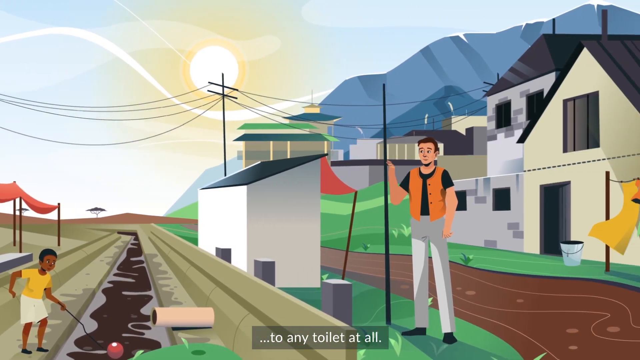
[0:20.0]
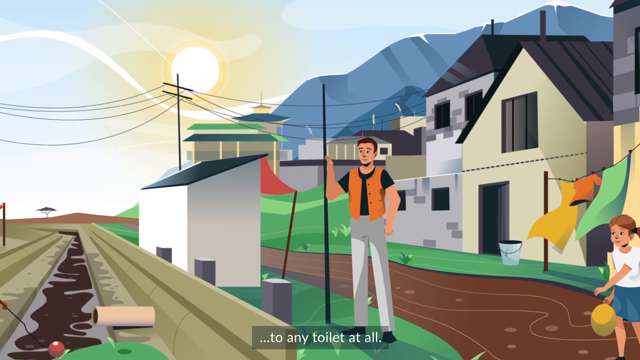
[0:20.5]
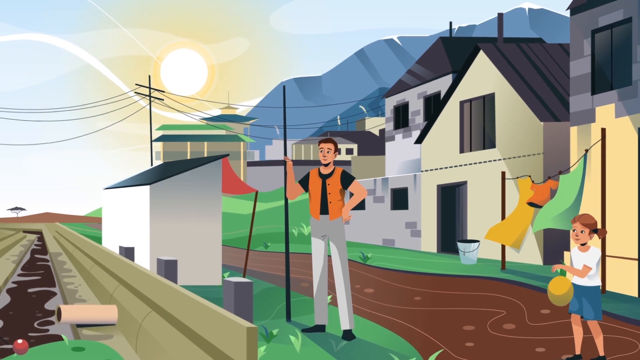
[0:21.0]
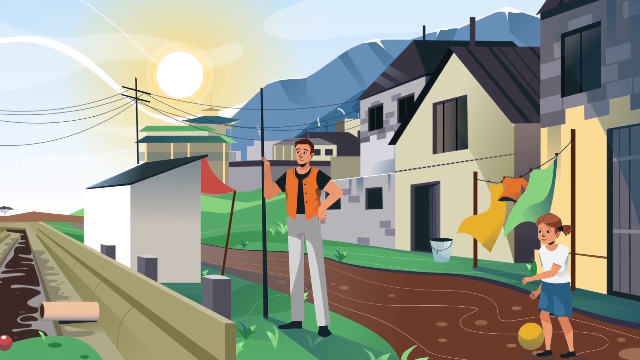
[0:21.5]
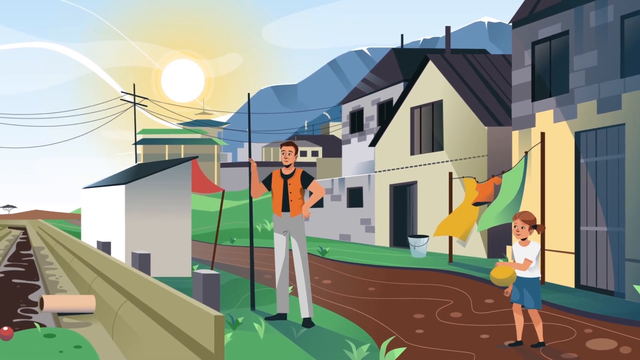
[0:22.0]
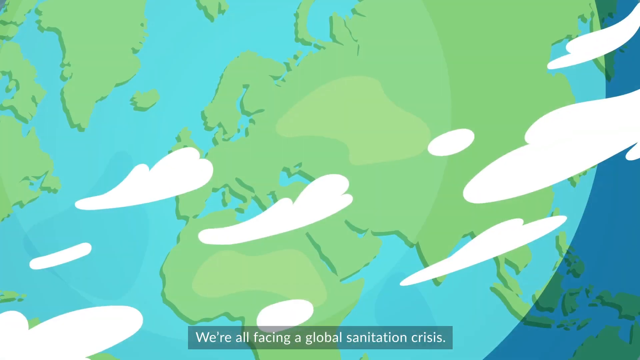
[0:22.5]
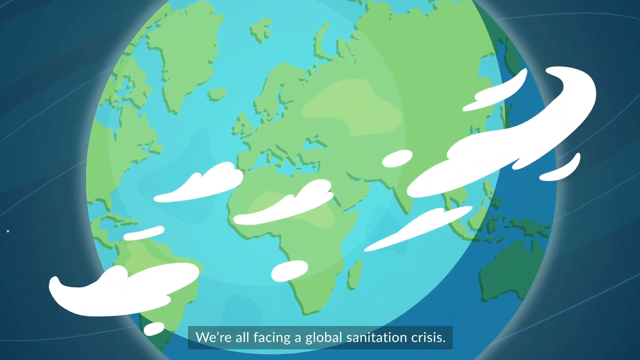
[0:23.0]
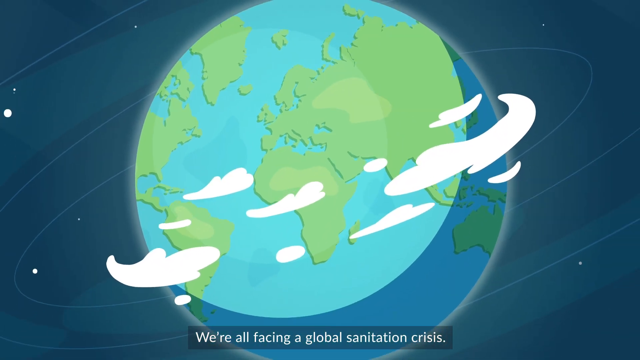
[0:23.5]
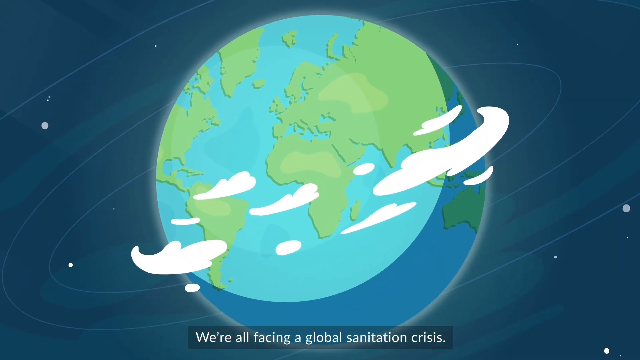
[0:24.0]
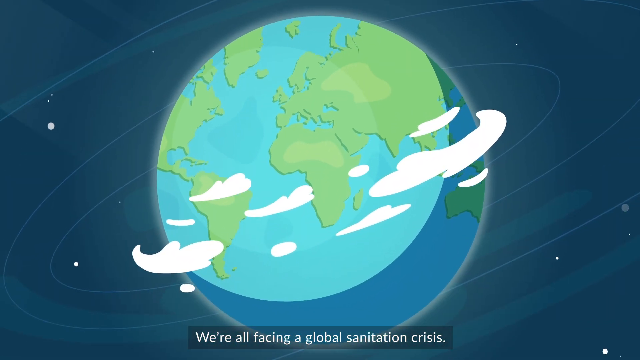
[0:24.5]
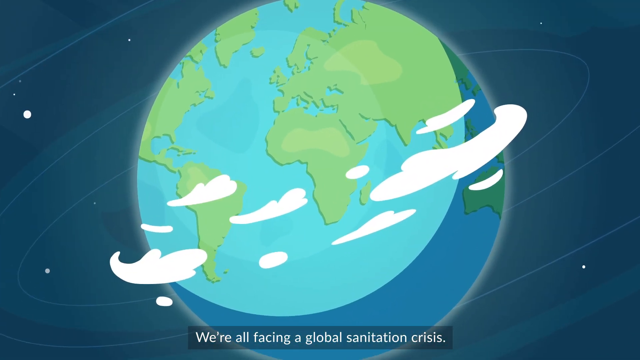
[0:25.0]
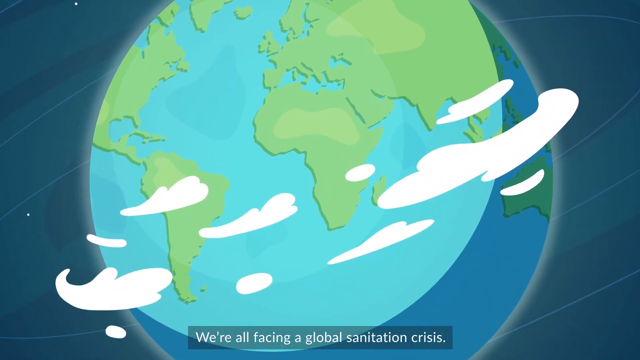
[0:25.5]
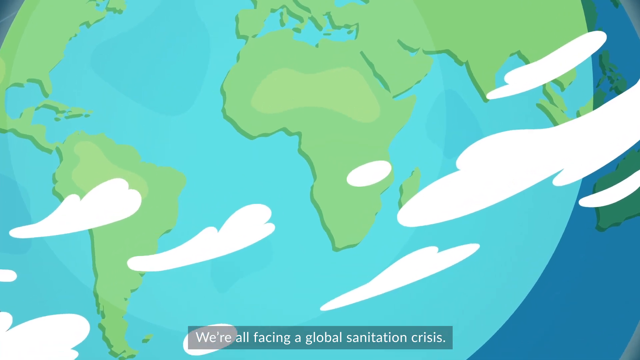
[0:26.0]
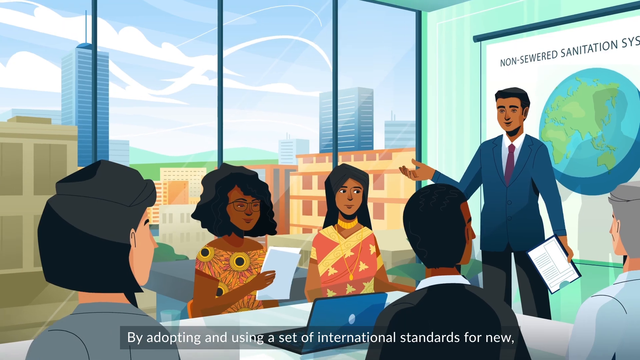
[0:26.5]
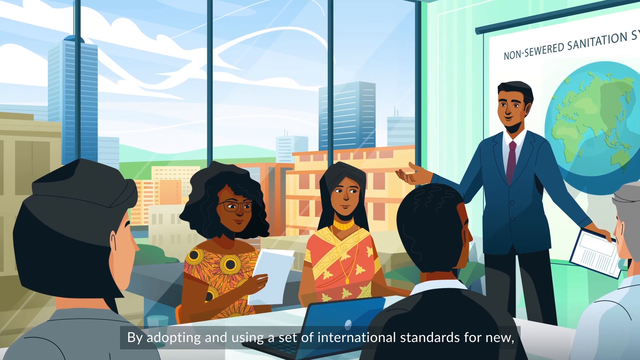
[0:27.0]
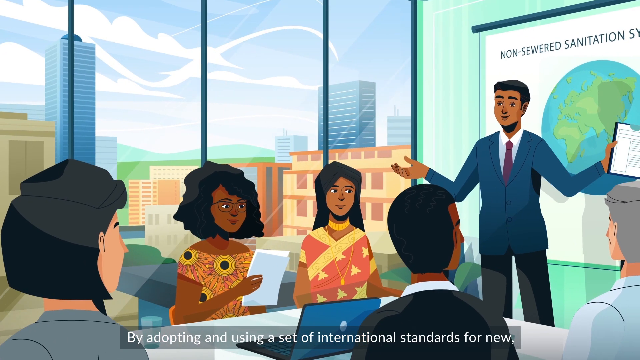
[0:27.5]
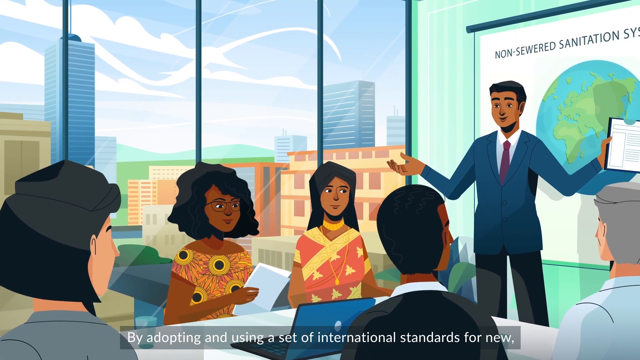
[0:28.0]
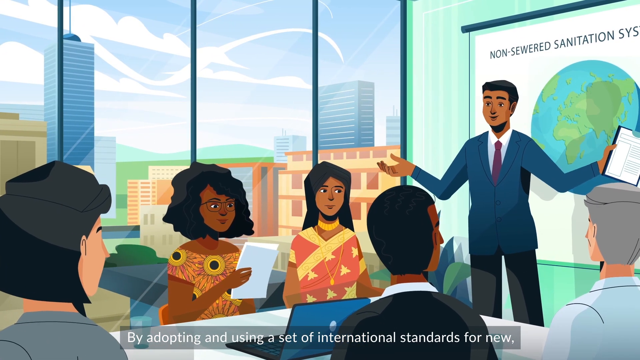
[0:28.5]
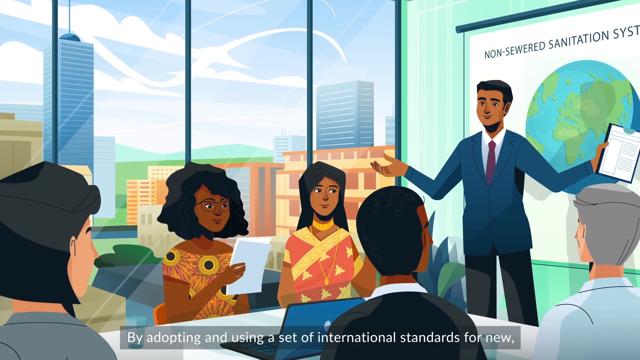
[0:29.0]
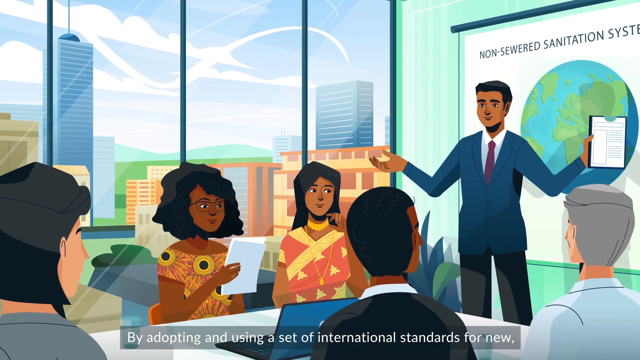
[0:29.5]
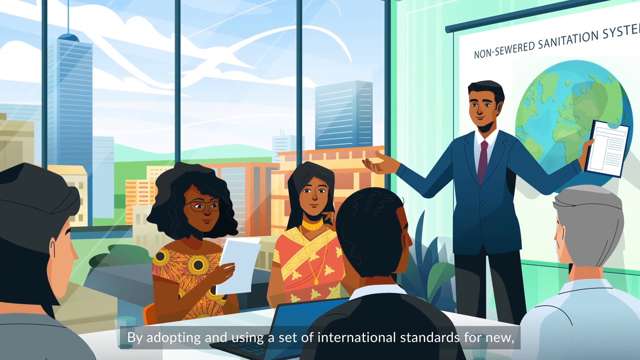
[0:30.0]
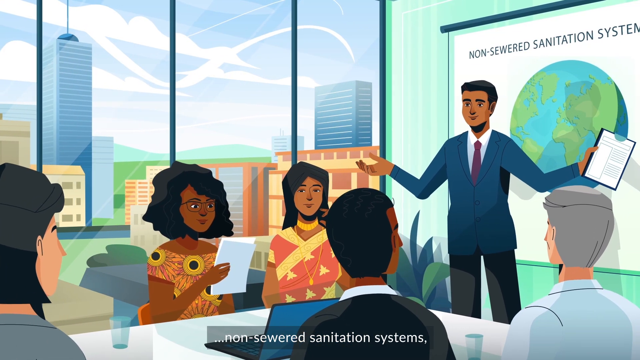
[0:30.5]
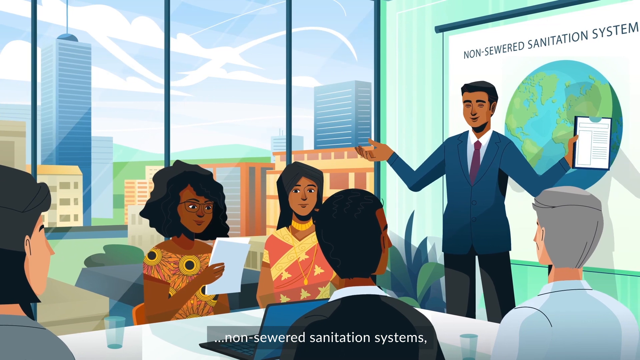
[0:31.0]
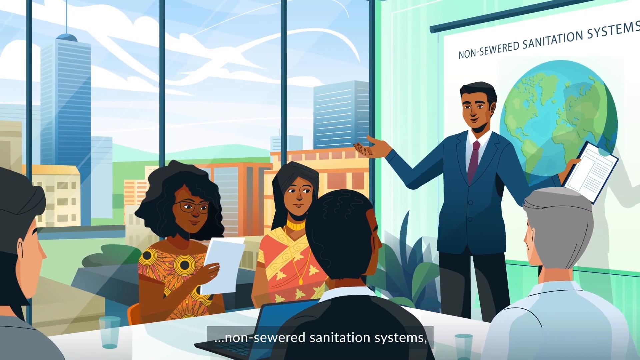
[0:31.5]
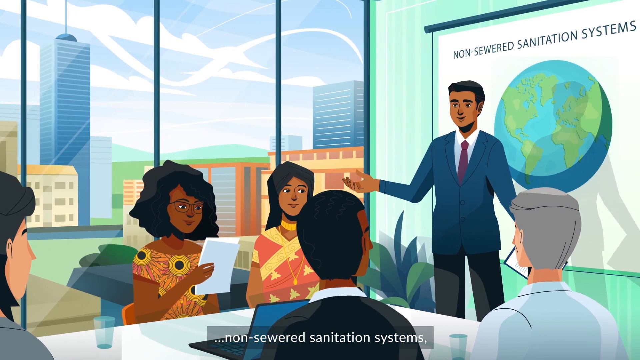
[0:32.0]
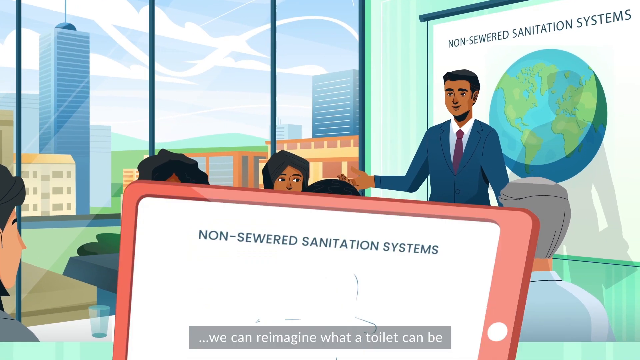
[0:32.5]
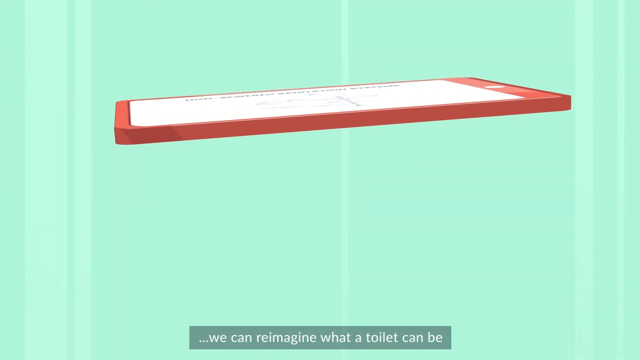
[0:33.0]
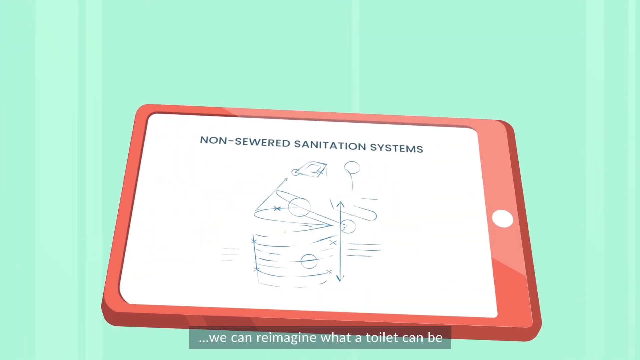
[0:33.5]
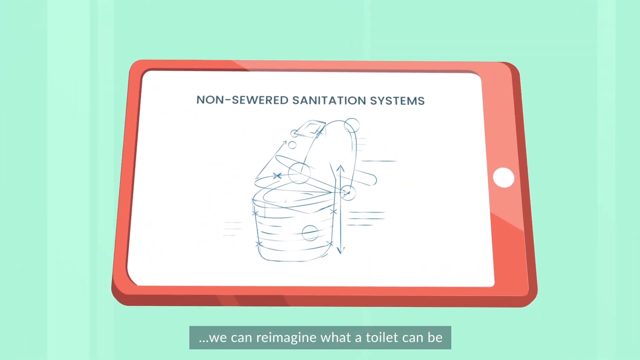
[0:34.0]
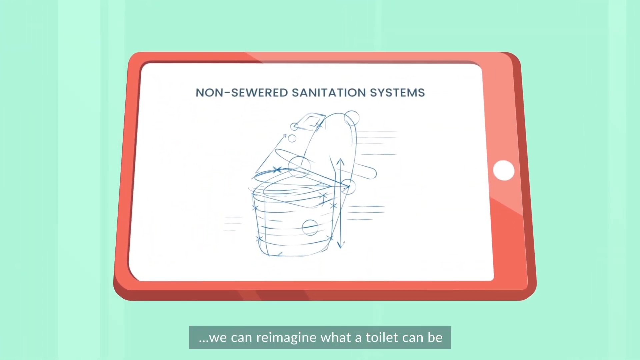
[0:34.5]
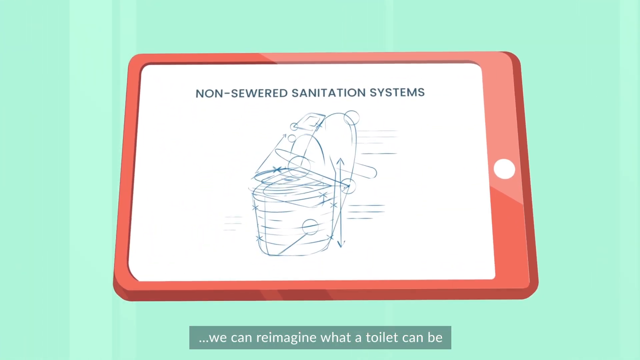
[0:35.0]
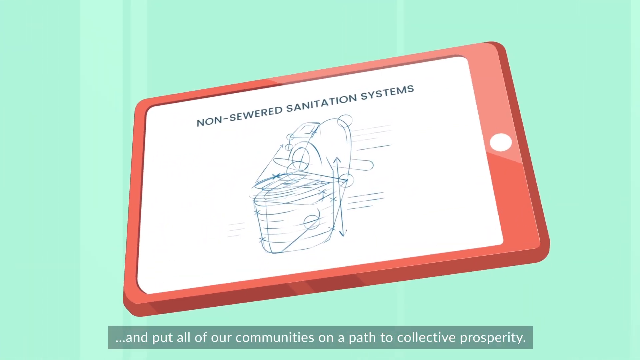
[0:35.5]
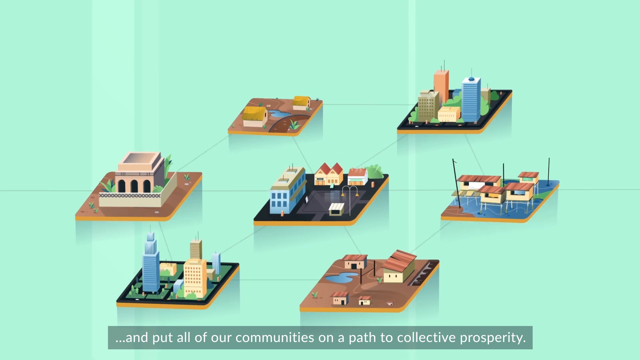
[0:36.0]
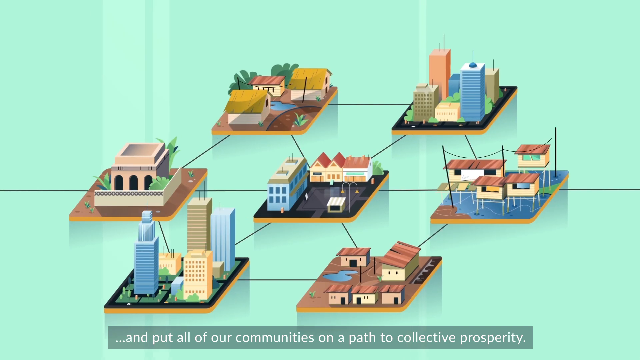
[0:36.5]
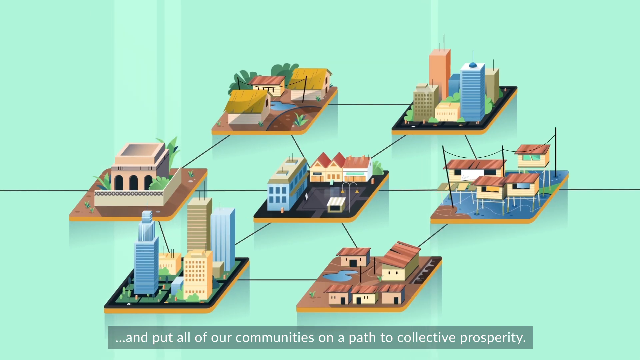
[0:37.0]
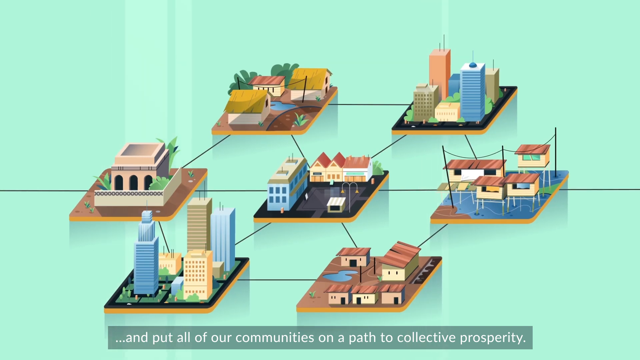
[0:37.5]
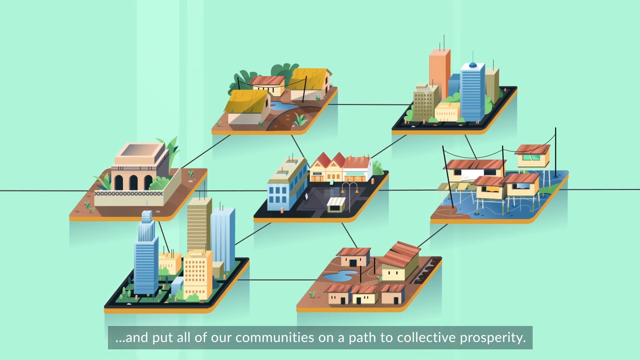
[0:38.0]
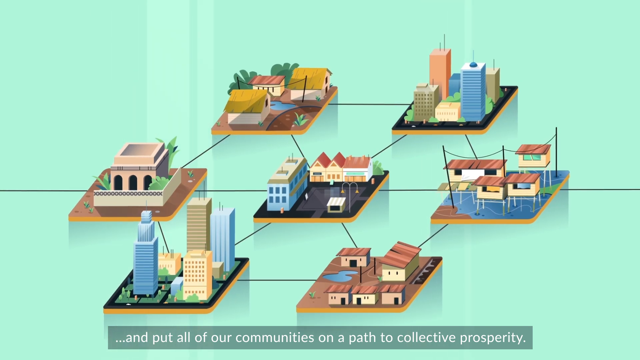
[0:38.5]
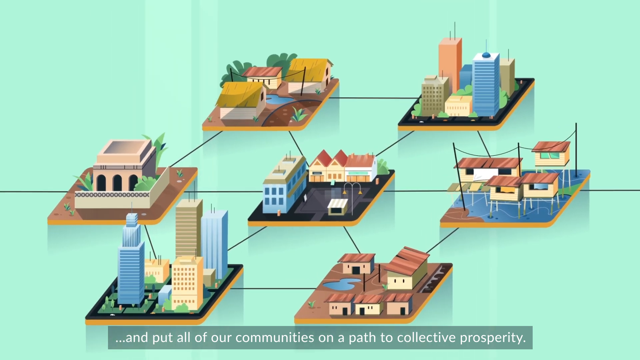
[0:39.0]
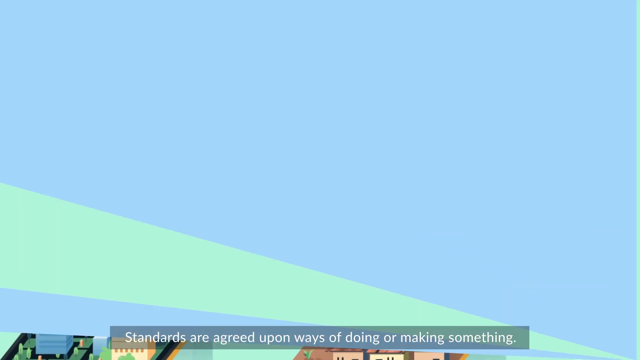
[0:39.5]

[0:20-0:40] People wearing decent clothes appear, and one man's workplace can be told from what he is wearing. A family is shown, with people putting some clothes on while the kids play with their balls. There is a broken pipe, and a kid plays with a ball in the sewage. People are shown in an office. Buildings appear, some of them nice, the sun is coming out, and poles are visible.